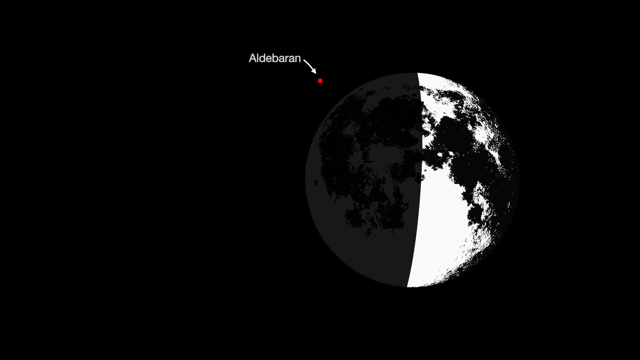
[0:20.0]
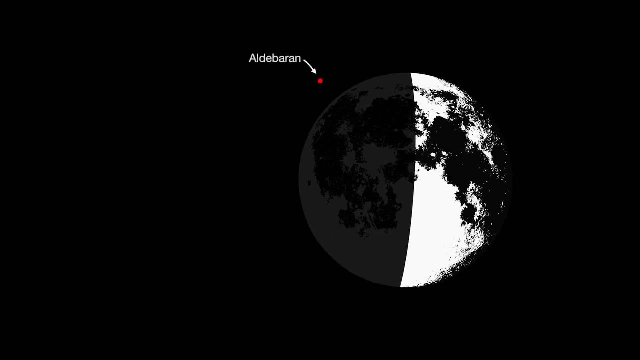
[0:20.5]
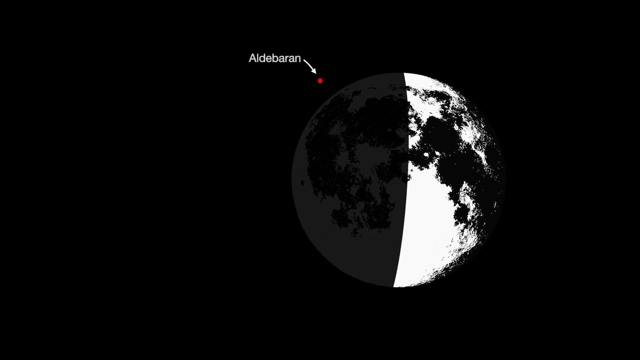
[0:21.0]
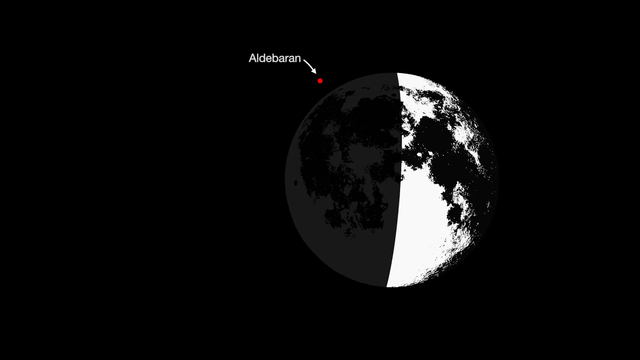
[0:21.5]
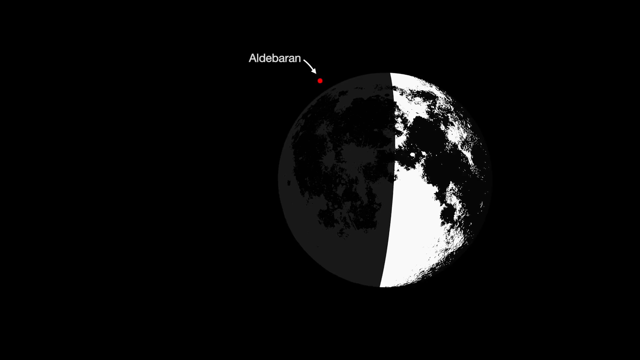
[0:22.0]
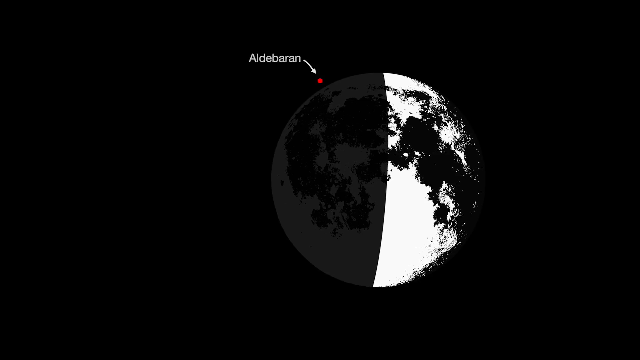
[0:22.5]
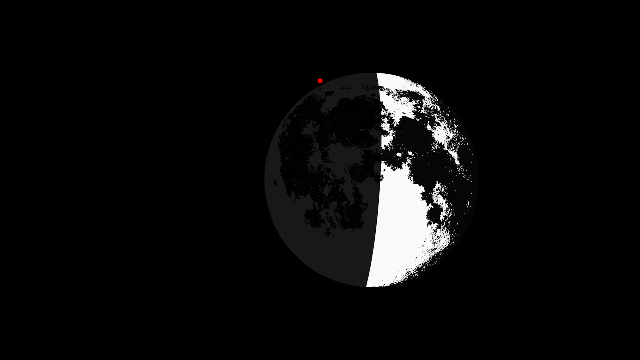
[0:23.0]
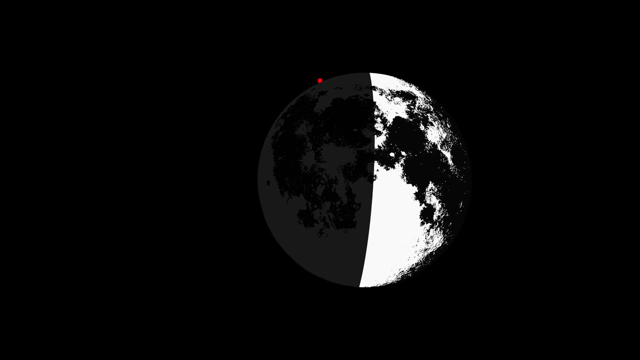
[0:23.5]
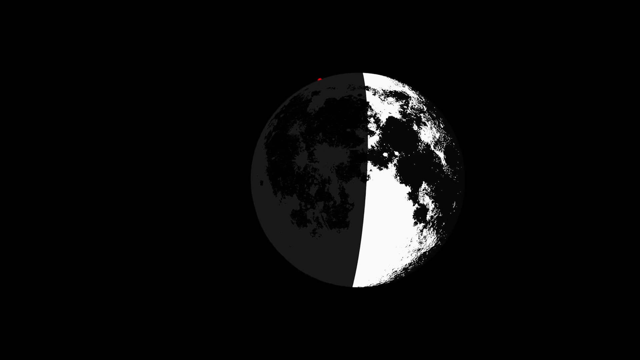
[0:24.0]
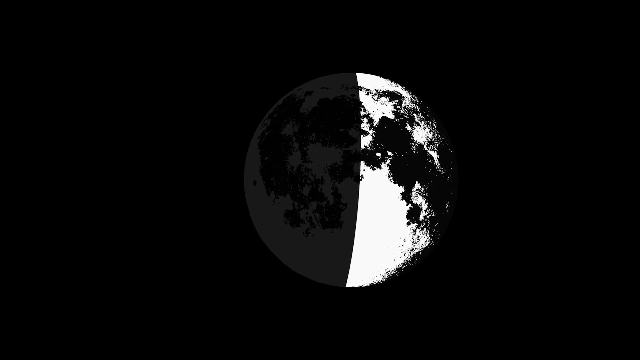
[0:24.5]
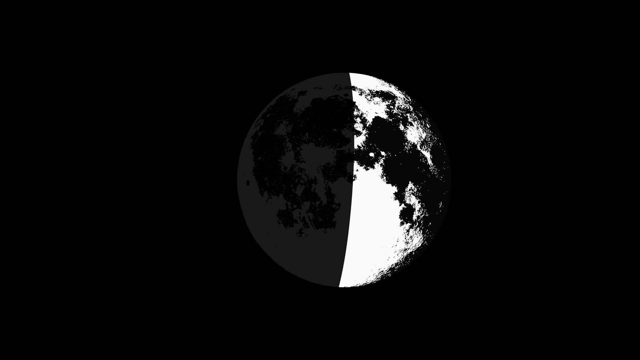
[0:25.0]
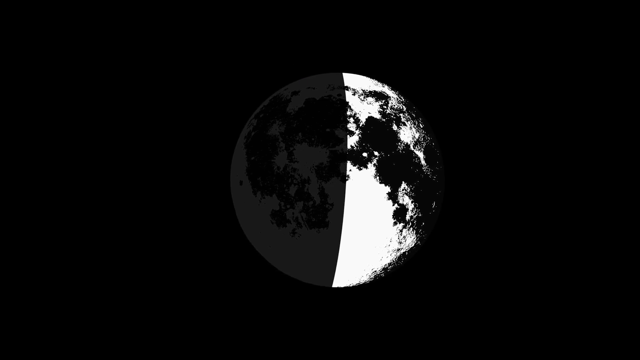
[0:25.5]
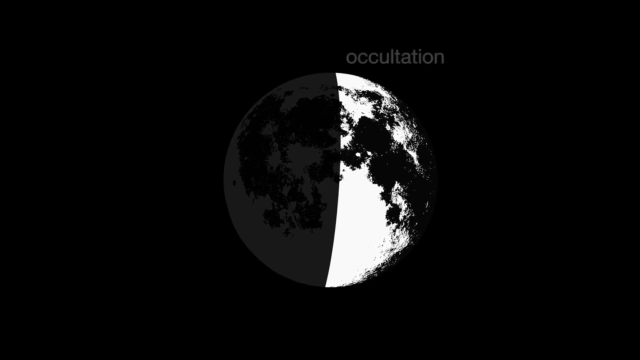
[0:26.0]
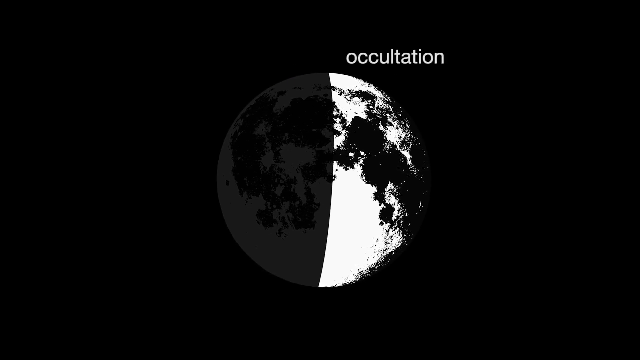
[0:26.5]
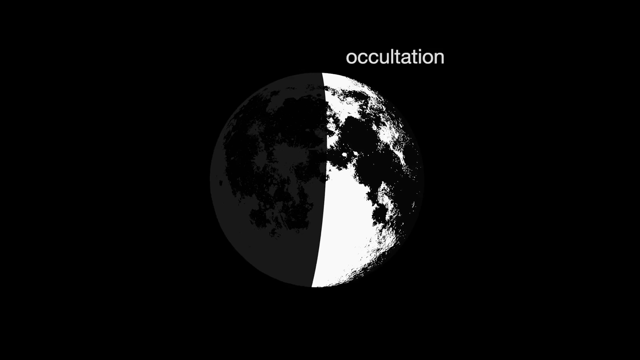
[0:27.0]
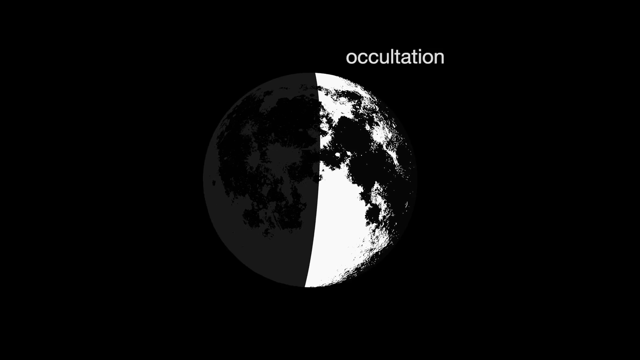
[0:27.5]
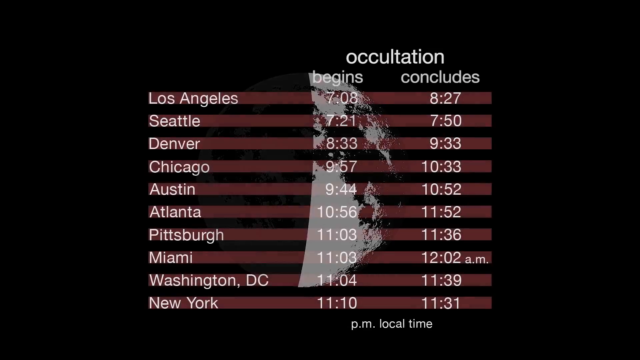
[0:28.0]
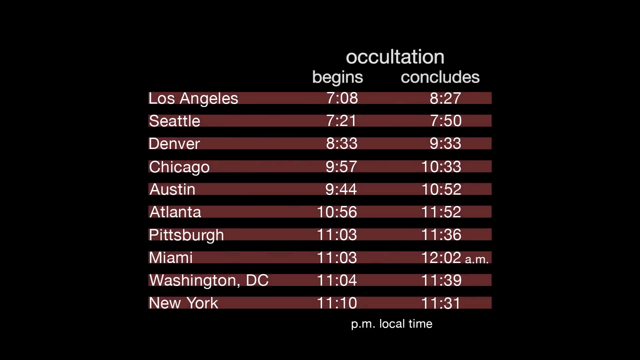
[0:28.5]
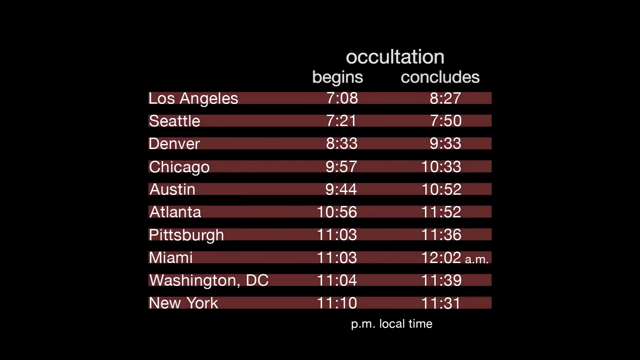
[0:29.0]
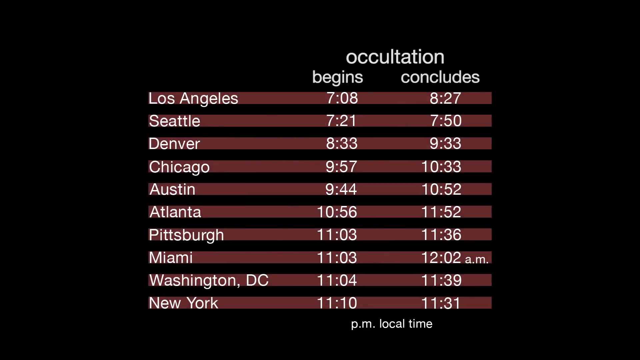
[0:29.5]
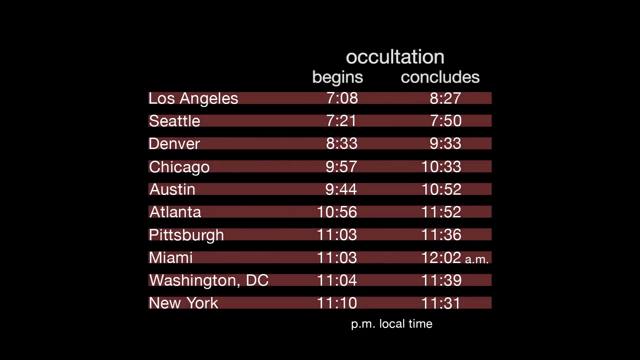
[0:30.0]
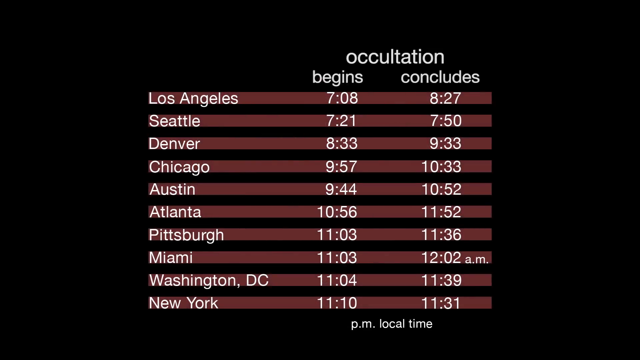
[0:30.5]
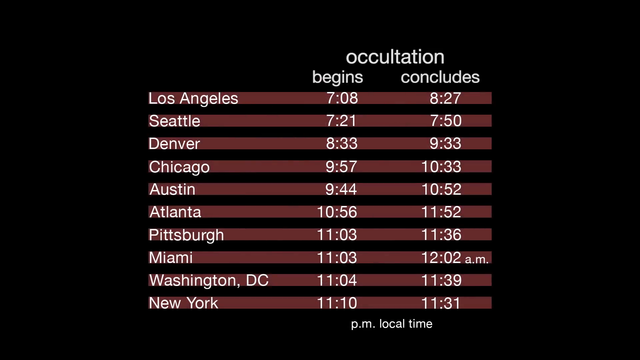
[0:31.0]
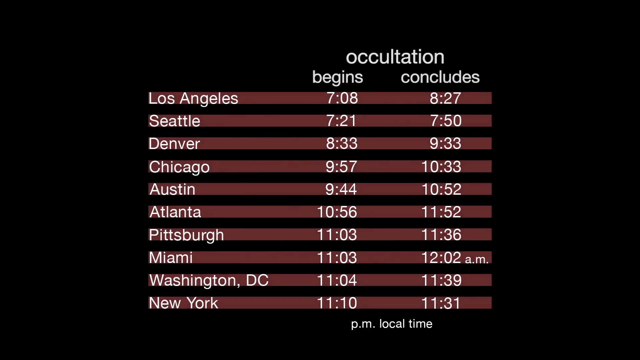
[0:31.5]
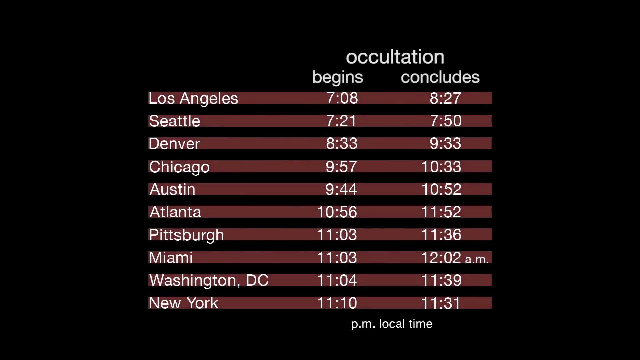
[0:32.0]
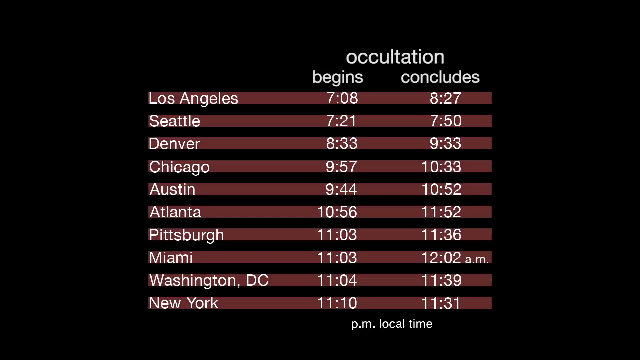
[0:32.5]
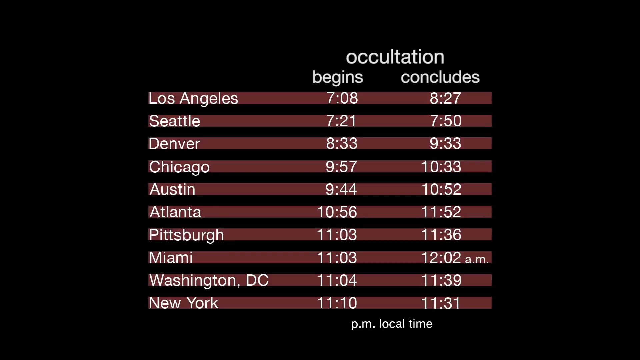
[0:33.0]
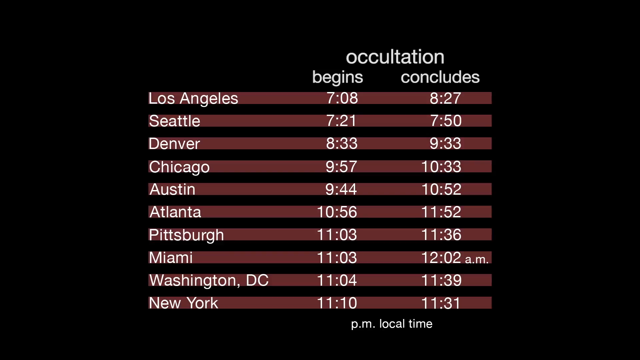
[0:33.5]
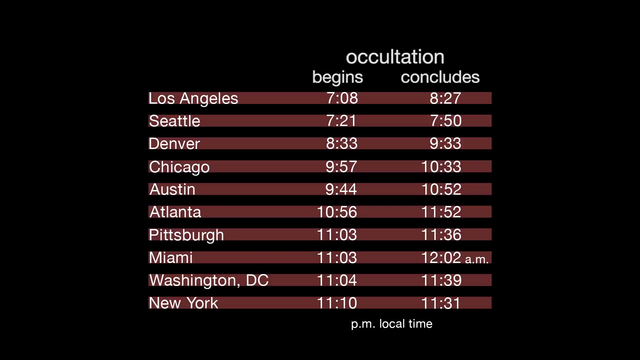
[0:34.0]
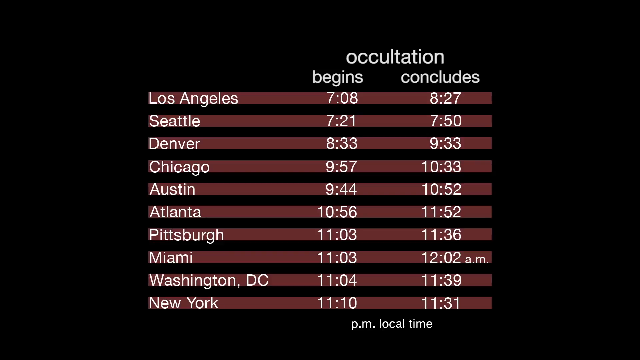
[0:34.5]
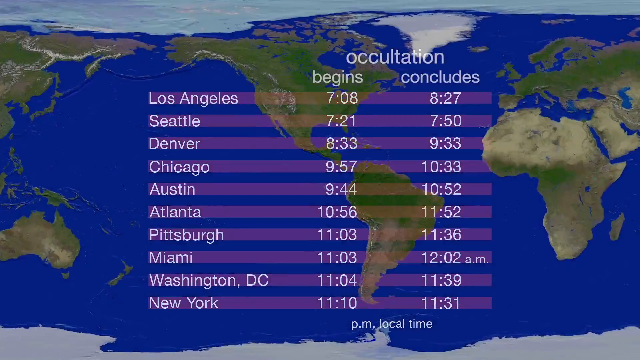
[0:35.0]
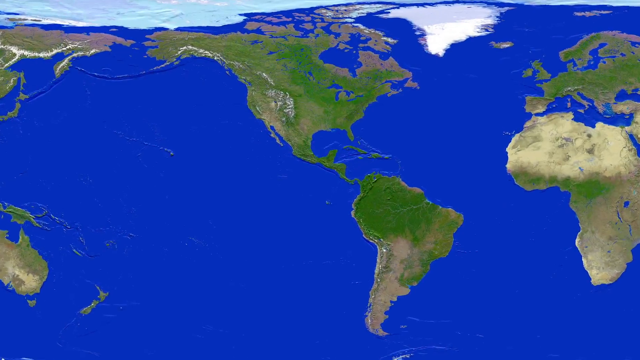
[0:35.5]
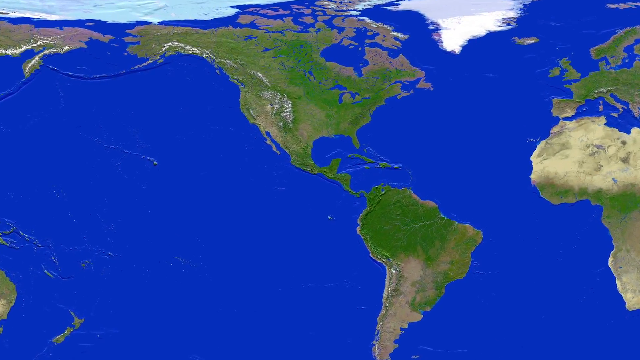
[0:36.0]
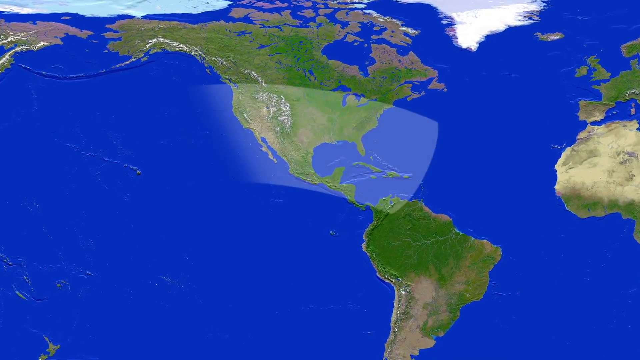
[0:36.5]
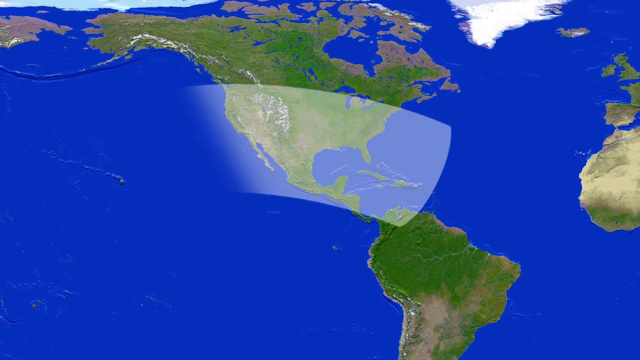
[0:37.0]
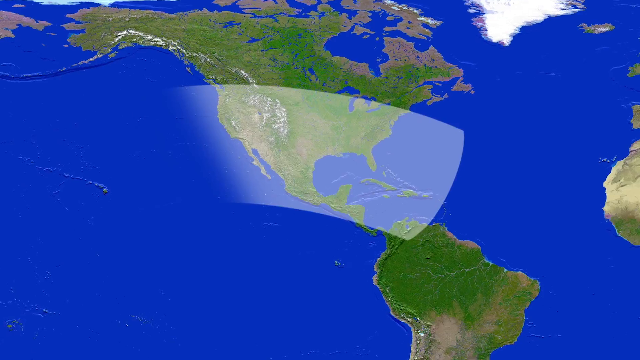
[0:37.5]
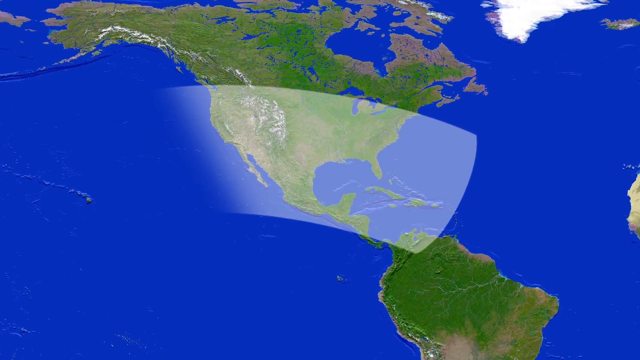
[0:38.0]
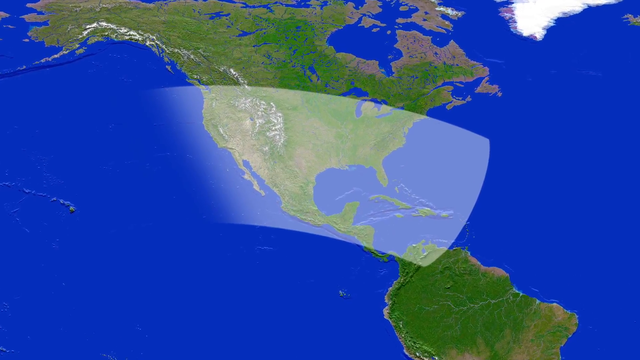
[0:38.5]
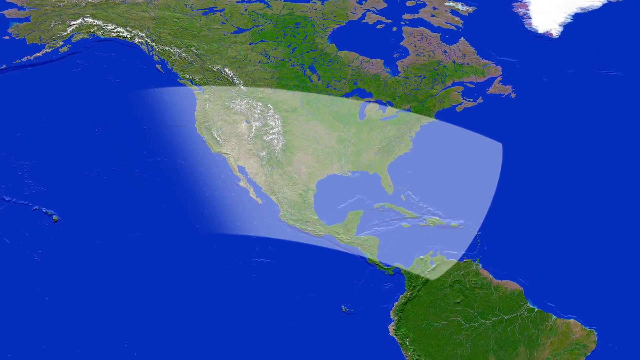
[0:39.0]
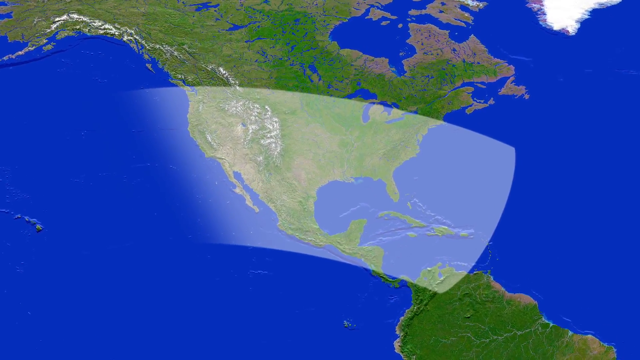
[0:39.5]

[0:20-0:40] The same right half of the moon and the same red dot labeled Aldebaran are shown. As the view scrolls, the half moon moves off to the left and disappears as a stats screen comes up listing different cities and the times the oculation begins and concludes. Basically all of them begin at nighttime. The earliest seems to be Los Angeles, beginning at 7:08 p.m. and concluding at 8:27 p.m., and the latest is New York, beginning at 11:10 p.m. and ending at 11:31 p.m. The video then cuts to a world map and starts zooming in on the United States.